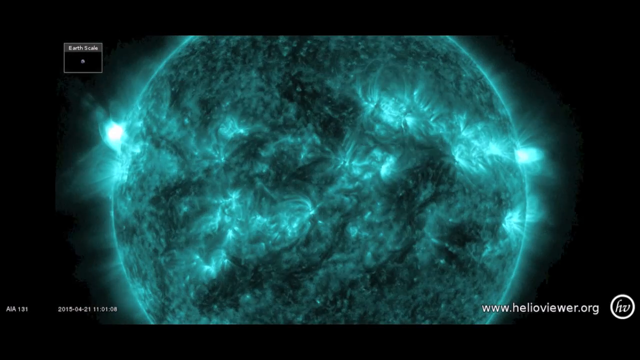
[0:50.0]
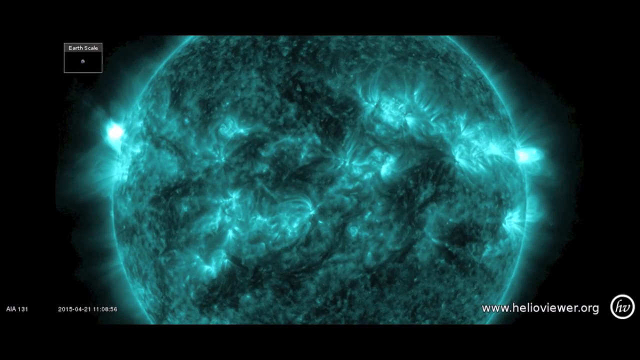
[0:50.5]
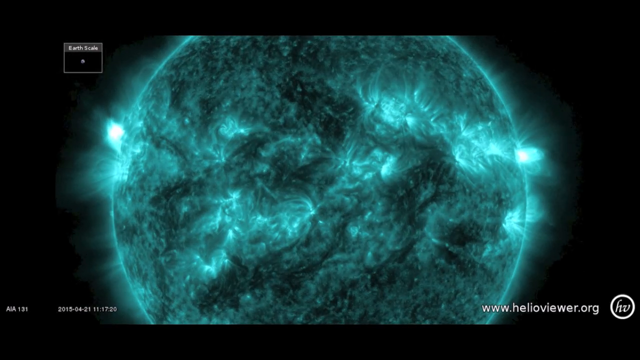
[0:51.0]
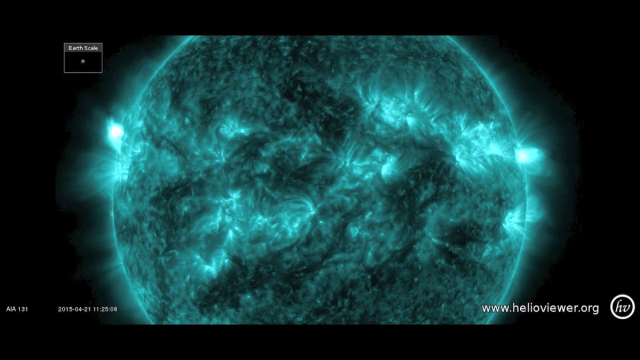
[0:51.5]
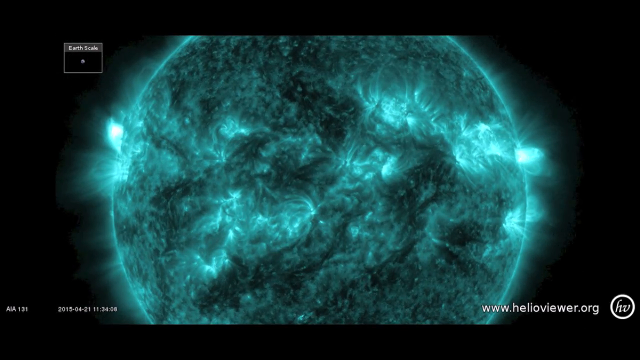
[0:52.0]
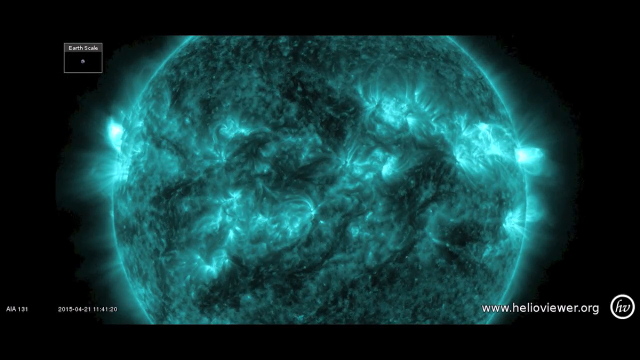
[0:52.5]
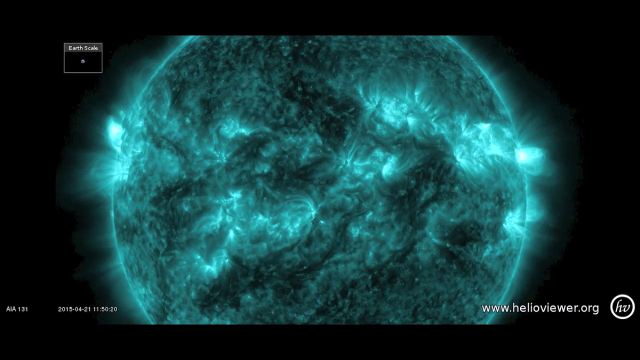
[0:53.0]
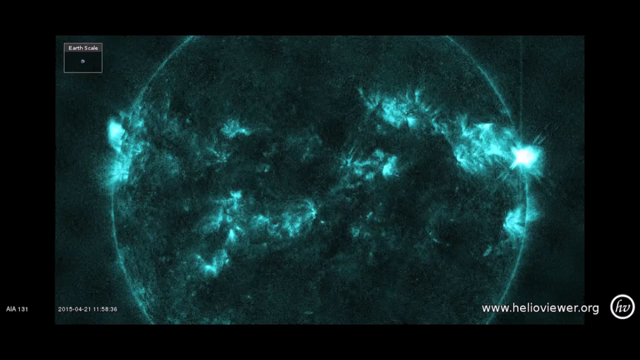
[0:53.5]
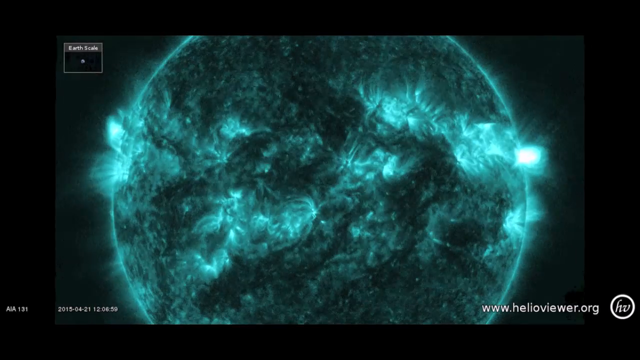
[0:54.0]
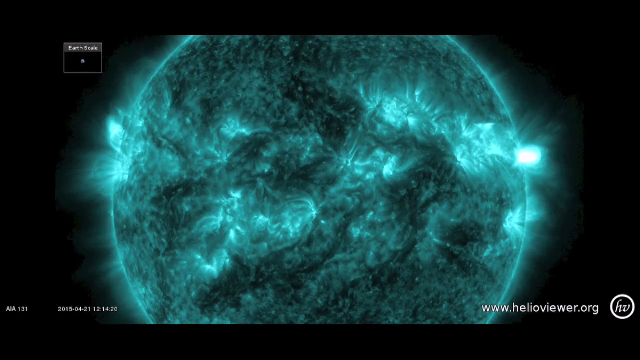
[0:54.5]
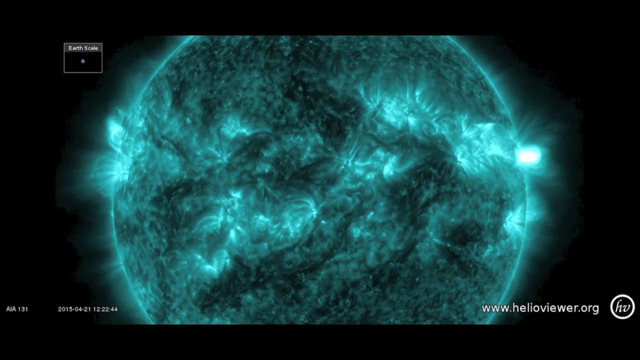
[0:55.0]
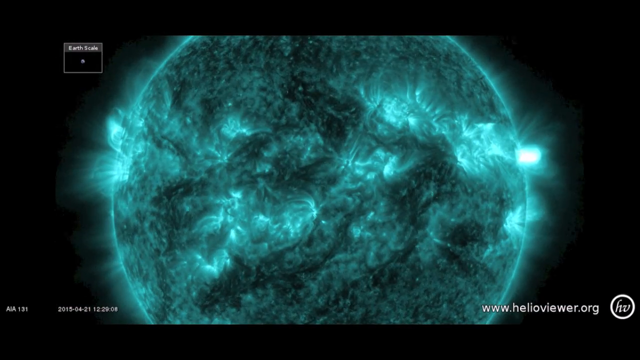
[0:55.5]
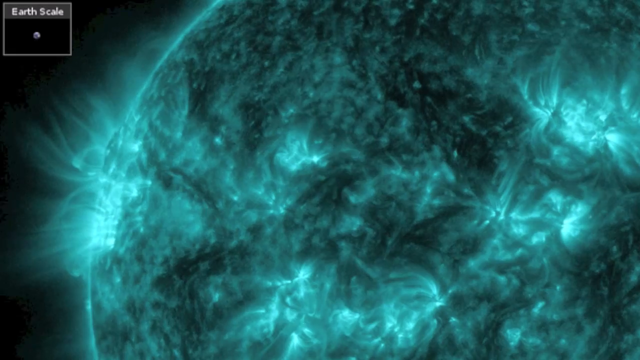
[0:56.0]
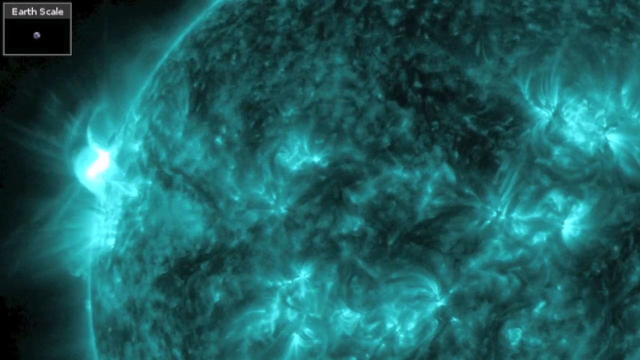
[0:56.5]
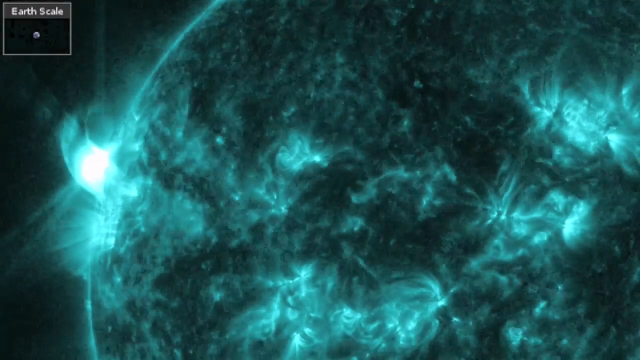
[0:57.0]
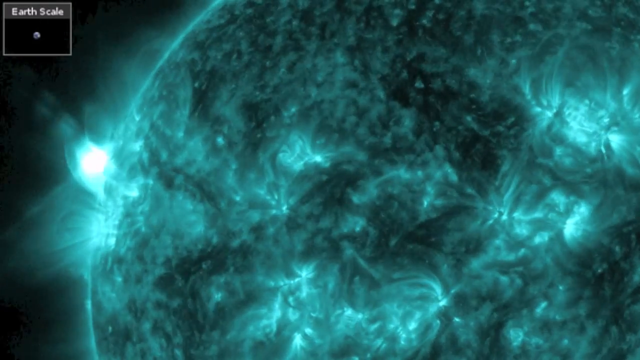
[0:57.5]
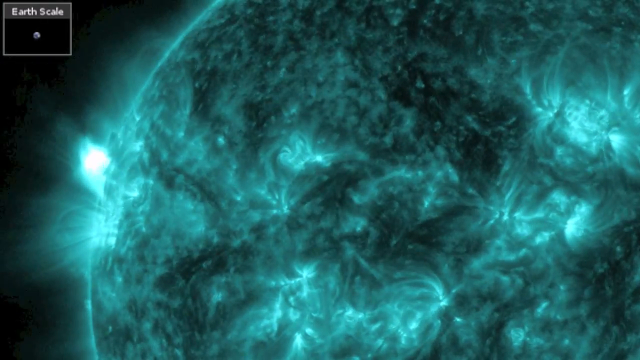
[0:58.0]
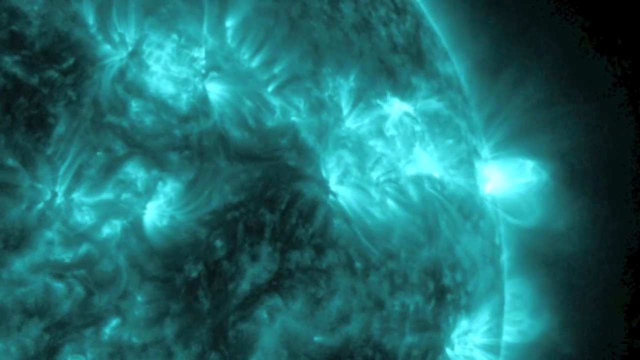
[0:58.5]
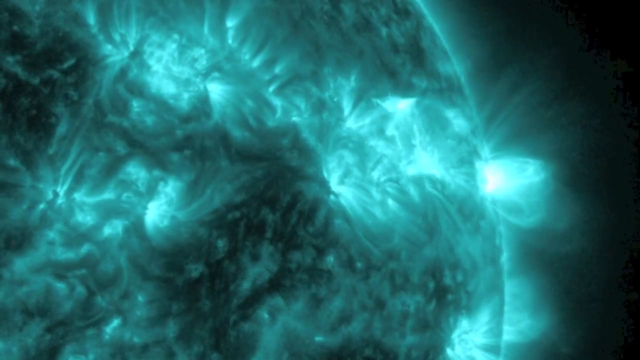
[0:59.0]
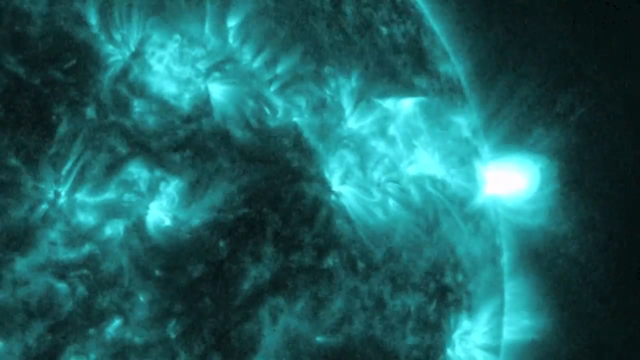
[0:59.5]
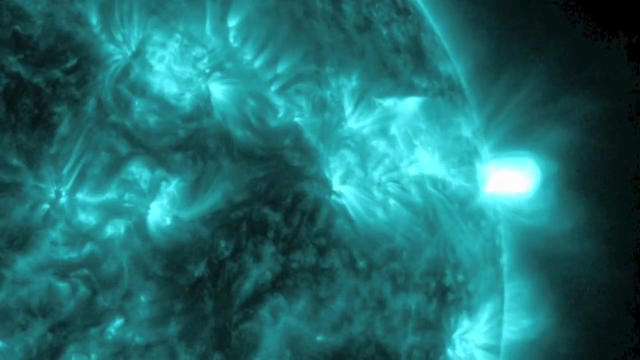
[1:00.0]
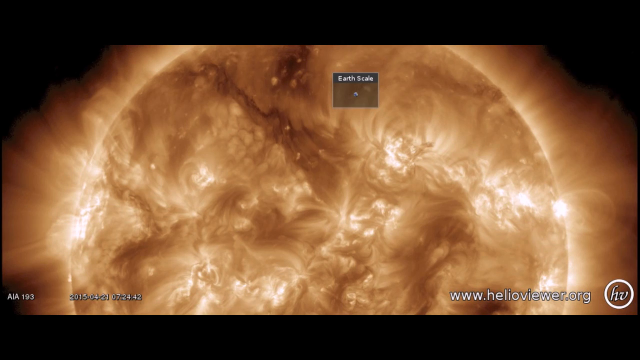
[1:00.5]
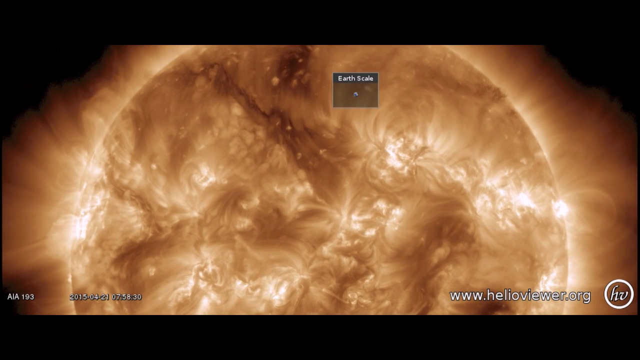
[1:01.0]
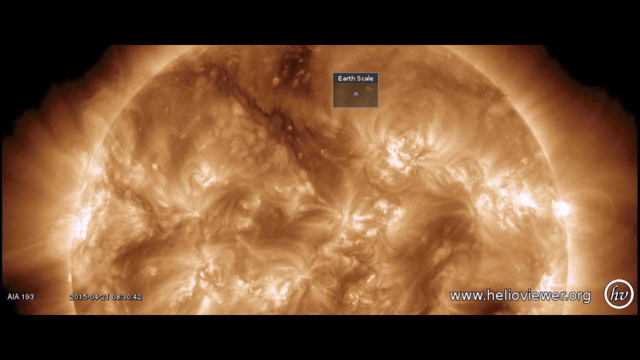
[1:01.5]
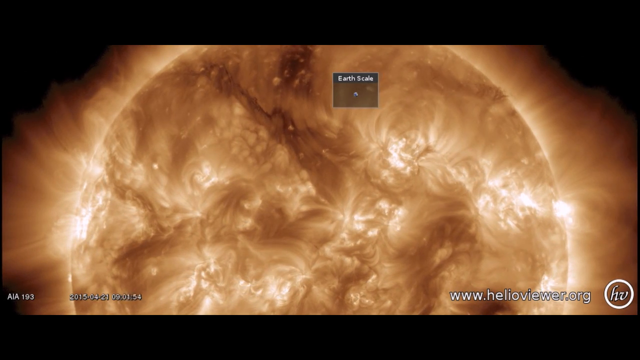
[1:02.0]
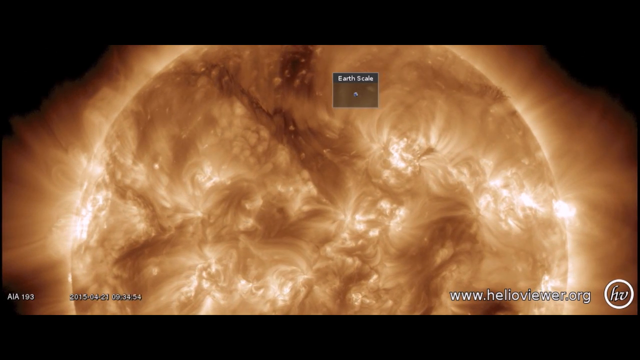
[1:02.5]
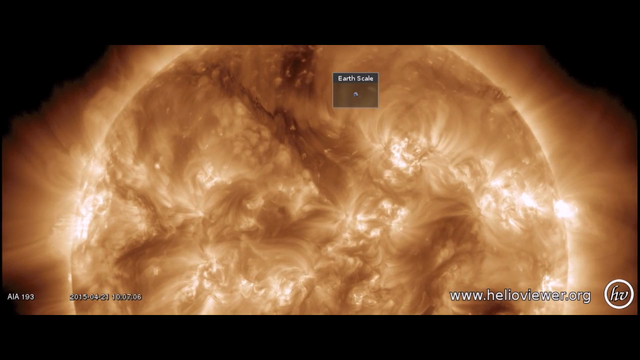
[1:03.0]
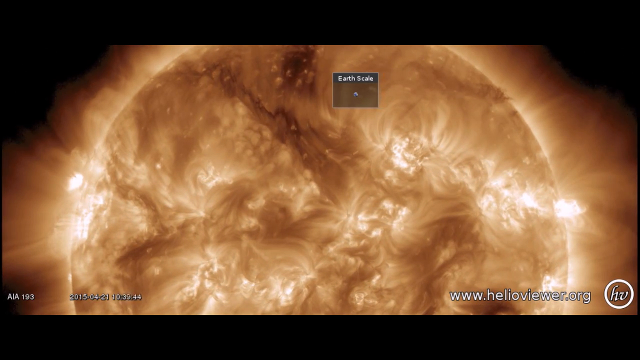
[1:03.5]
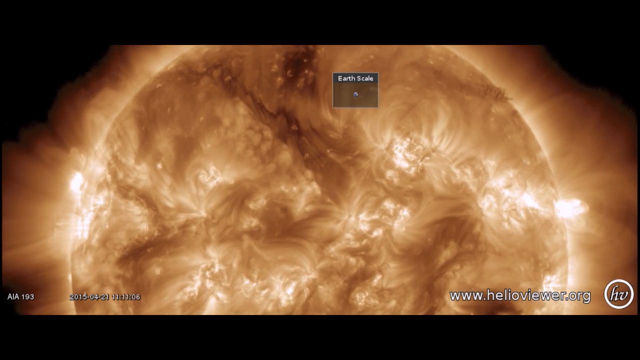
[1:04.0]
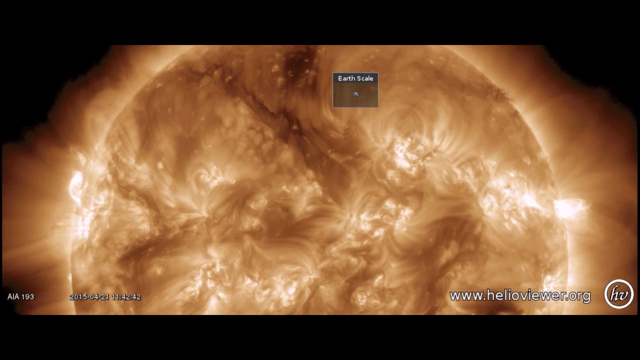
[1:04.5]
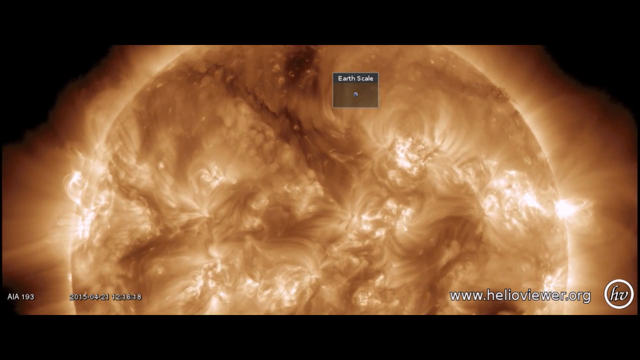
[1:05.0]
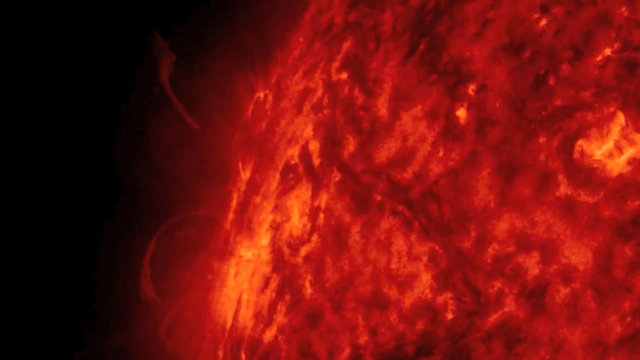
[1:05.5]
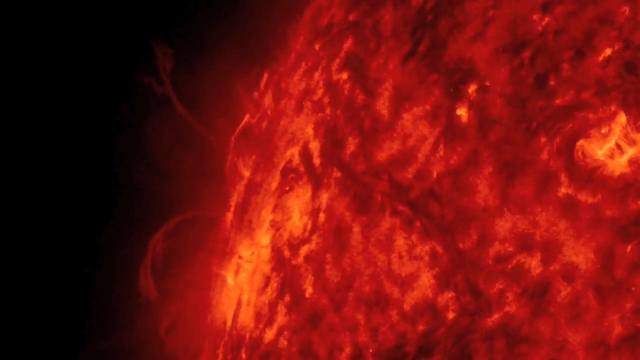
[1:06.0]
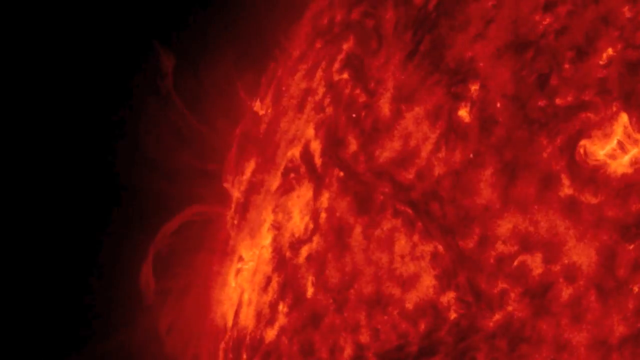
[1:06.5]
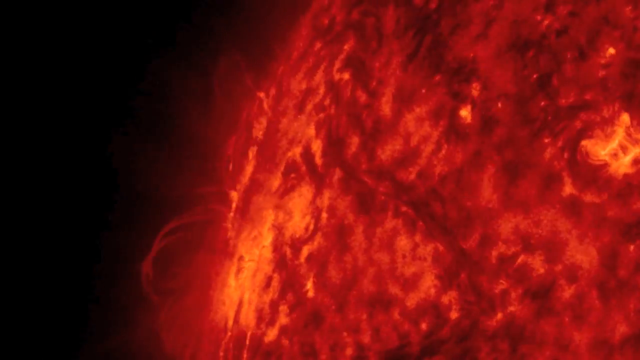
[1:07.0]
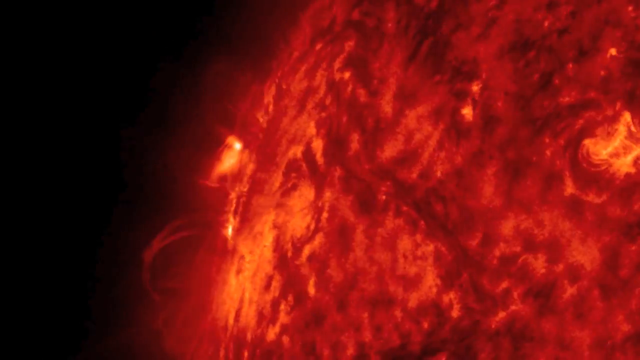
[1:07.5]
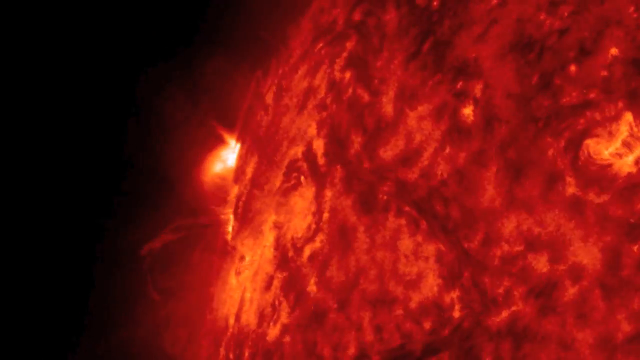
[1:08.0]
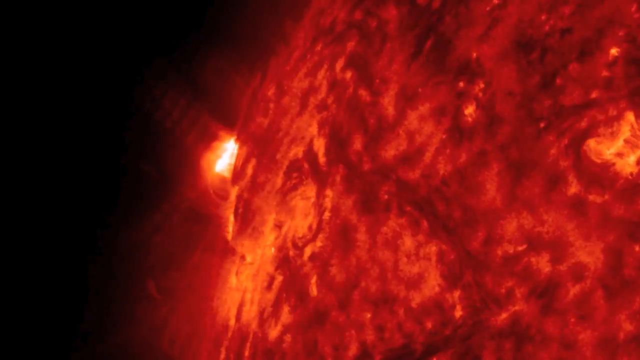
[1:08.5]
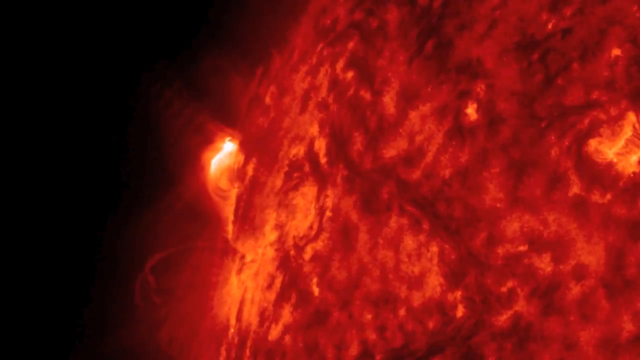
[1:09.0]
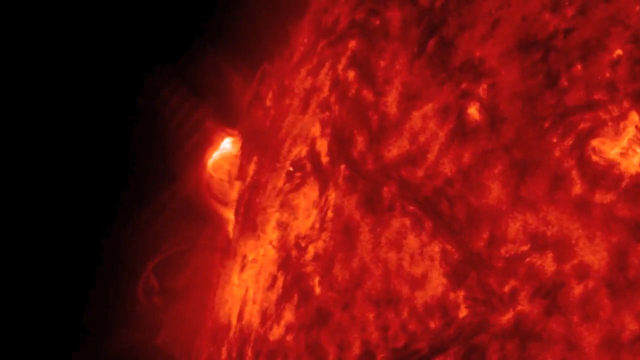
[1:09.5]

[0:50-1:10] What looks like a wall of teal and black swirls glows on screen. At the bottom right, white text reads "www.helioviewer.org". The view zooms in at the top left, where there is more glowing, and then shows the top right, where there appears to be a ball of glowing white light on the right side. Another scene follows with what looks like glowing orange and black swirls against a black background. The view then goes to the left side of a red and black glowing ball, where there appear to be some explosions on the left side, and shows a black and red swirl viewed from the top left.